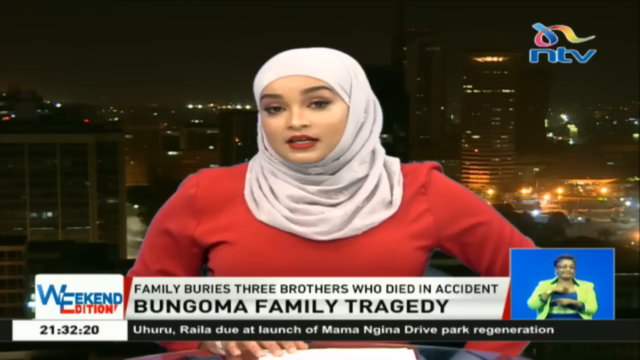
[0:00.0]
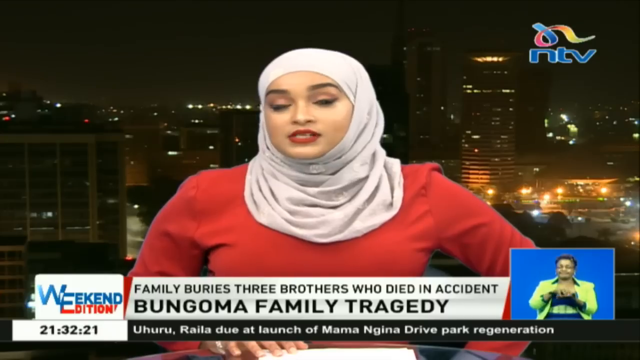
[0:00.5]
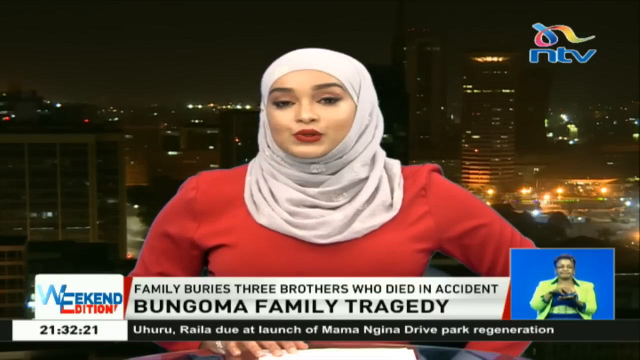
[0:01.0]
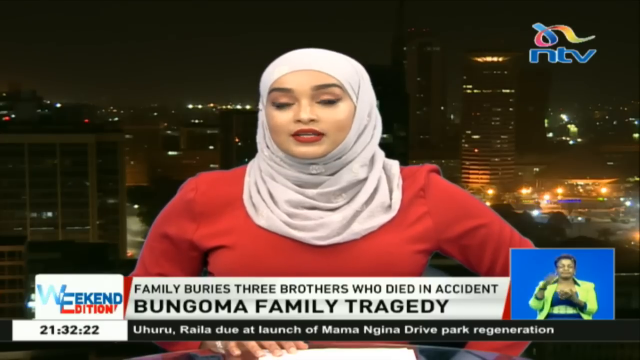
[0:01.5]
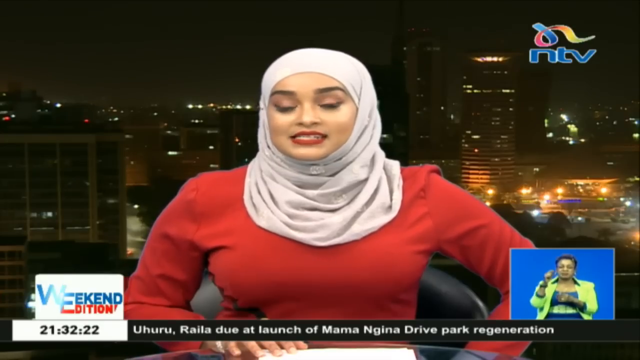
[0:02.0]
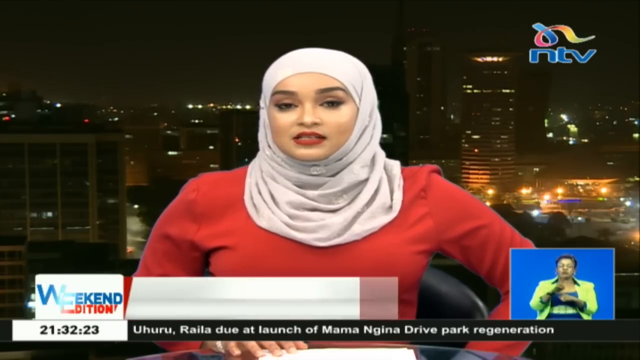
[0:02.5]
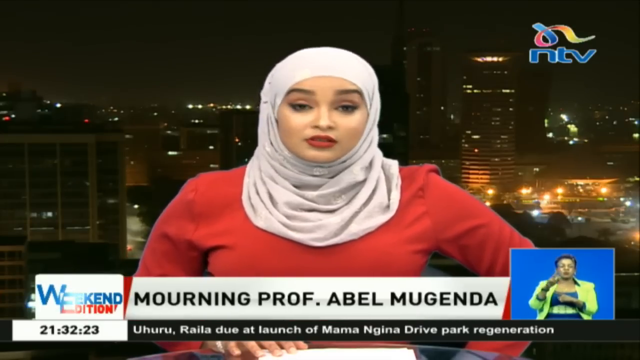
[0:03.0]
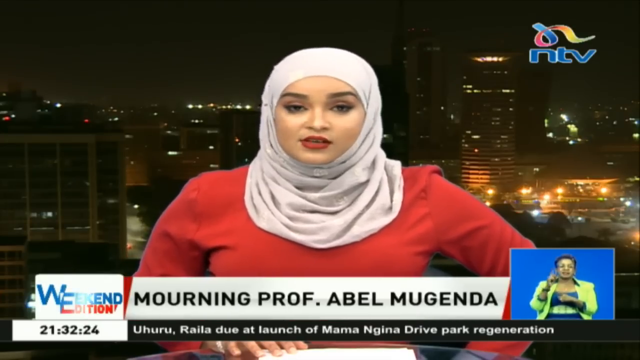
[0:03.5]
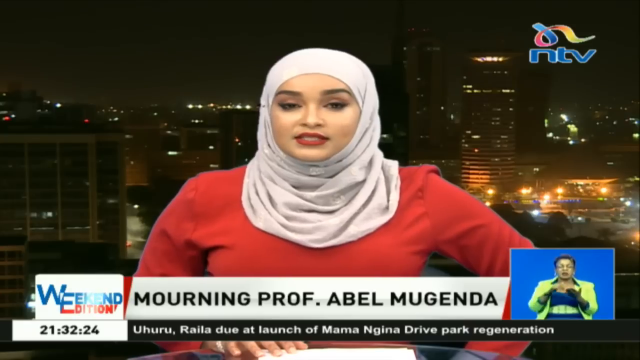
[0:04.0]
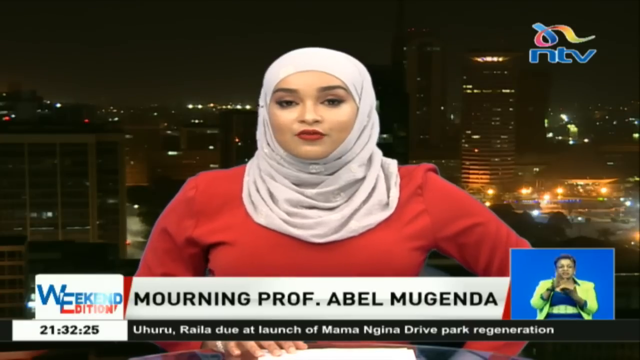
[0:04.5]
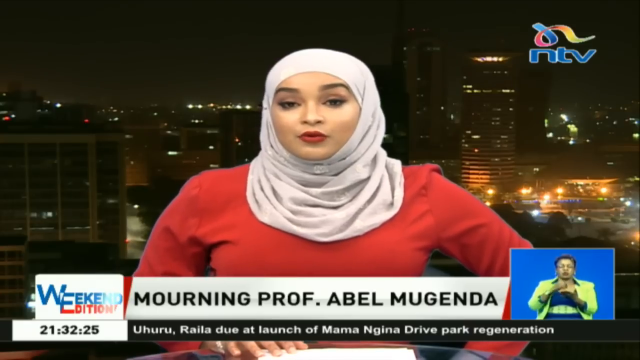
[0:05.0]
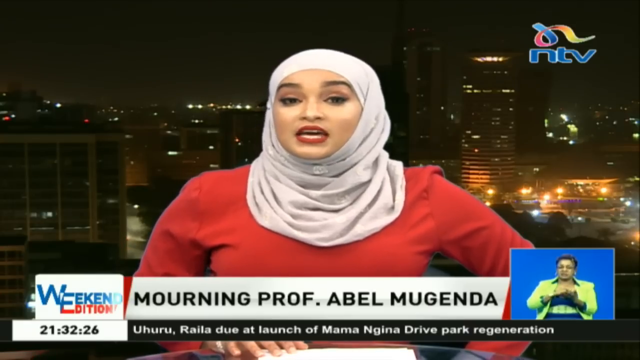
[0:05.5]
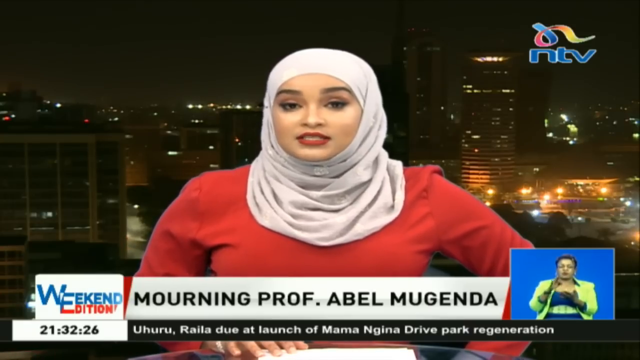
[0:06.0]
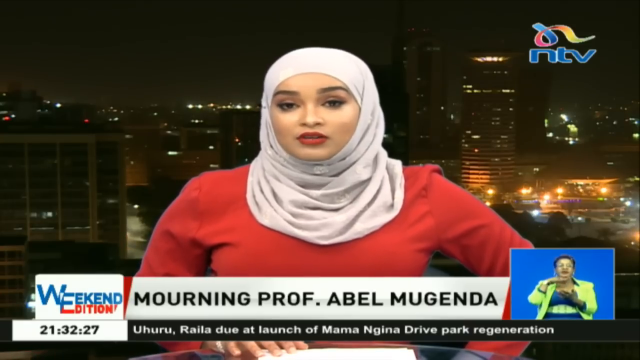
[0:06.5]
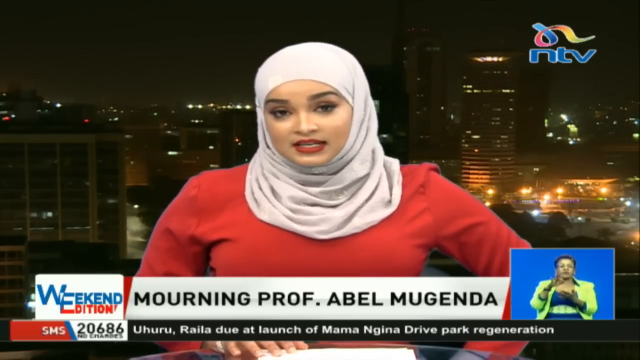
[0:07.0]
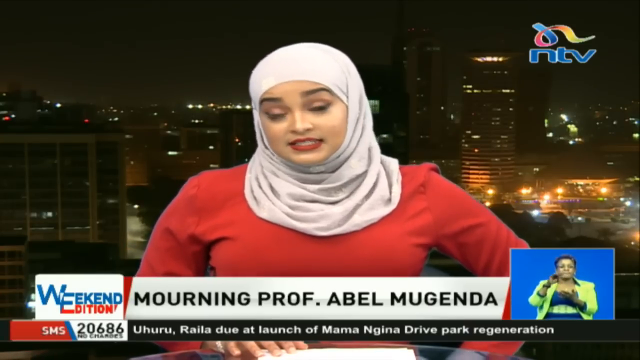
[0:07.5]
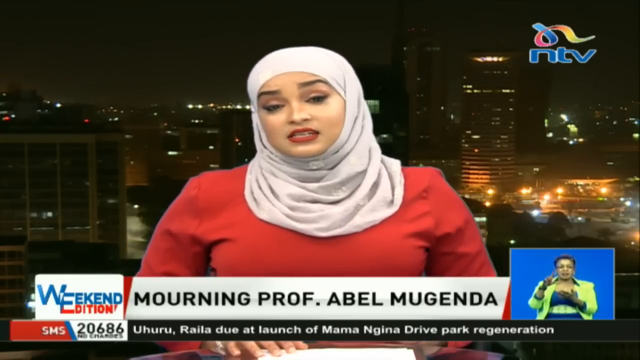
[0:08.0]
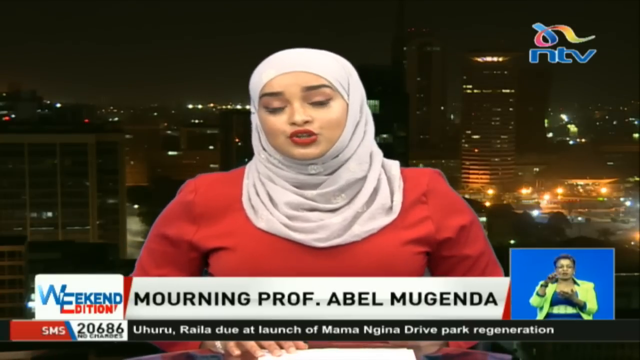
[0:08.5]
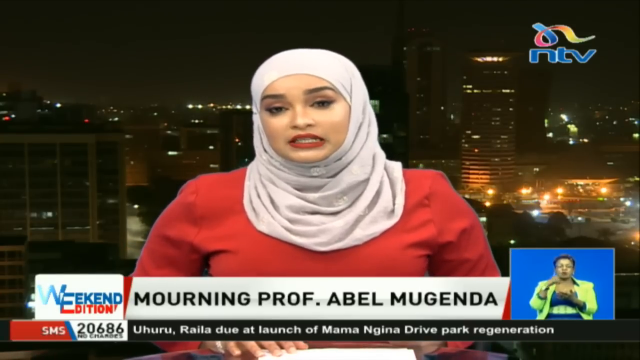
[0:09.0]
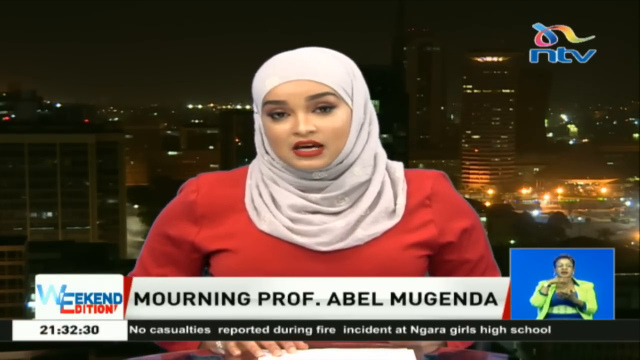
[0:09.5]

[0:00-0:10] A woman who appears Arabic is on screen, wearing a peach, pinkish hijab that covers her head but not her mouth, red lipstick and a red top, with a cityscape backdrop at night; no stars are visible. The caption reads "Bungoma family tragedy." A sign language interpreter is in the lower right-hand corner. The report apparently concerns mourning a professor, Abel Mujenda, who has apparently passed away. It is the weekend edition of MTV, which looks like a society news broadcast program.